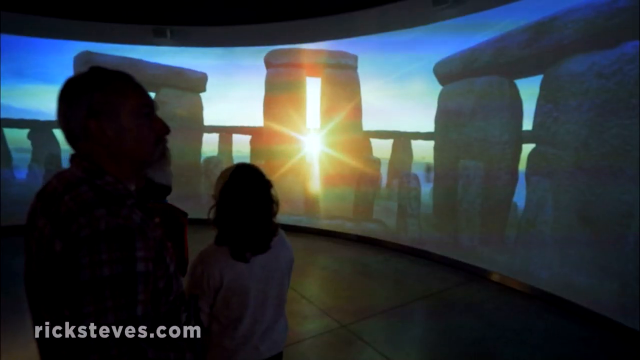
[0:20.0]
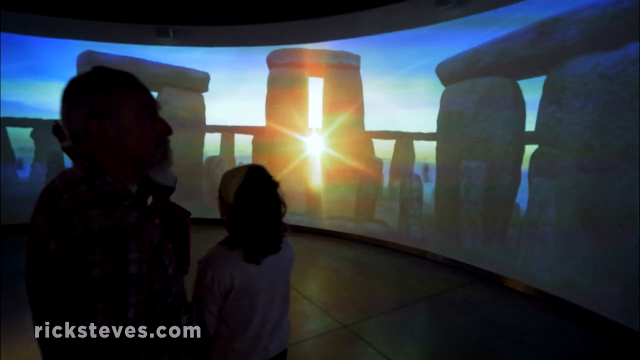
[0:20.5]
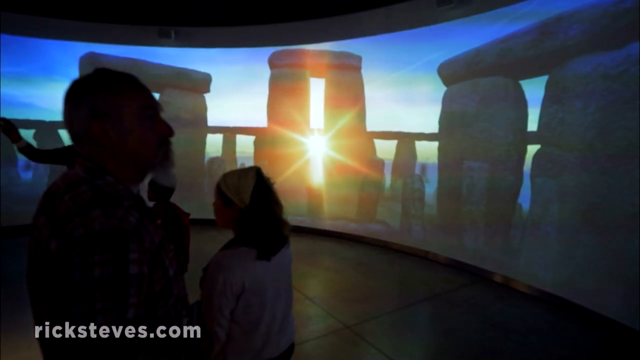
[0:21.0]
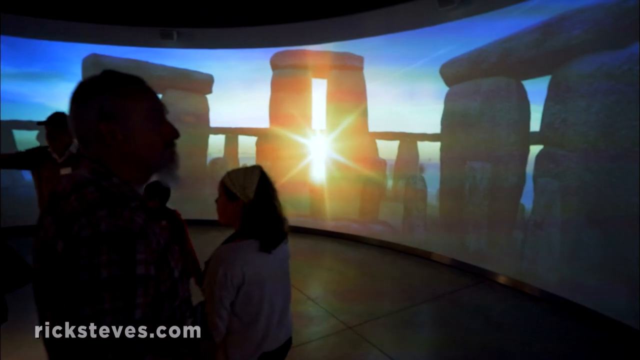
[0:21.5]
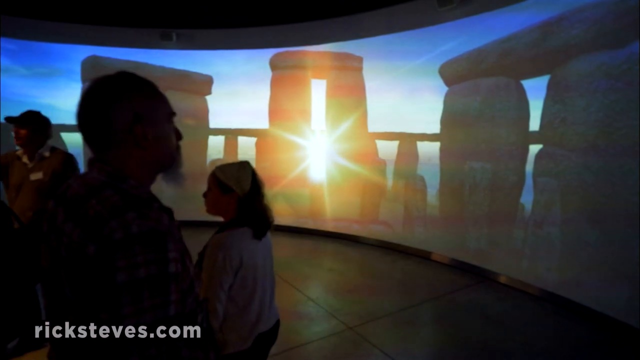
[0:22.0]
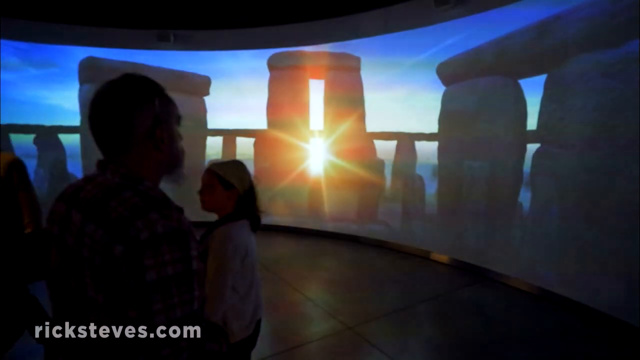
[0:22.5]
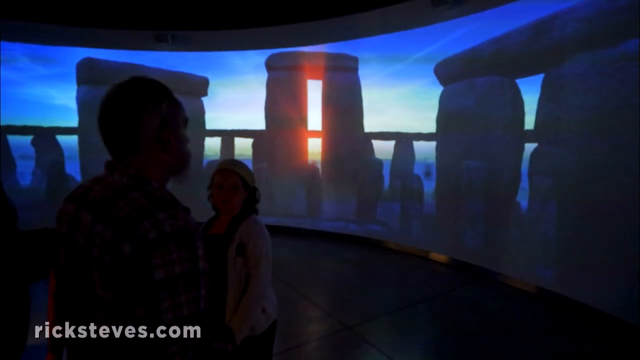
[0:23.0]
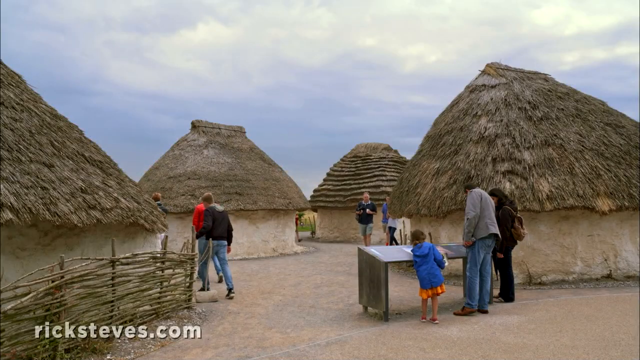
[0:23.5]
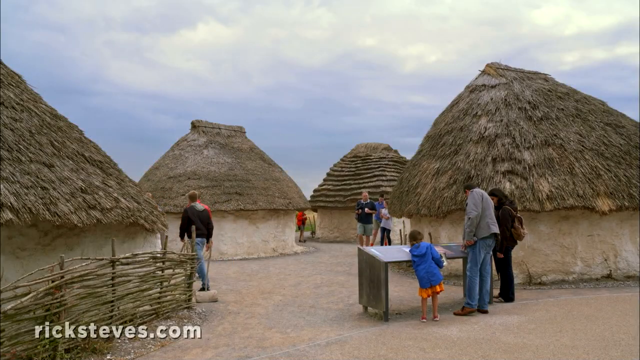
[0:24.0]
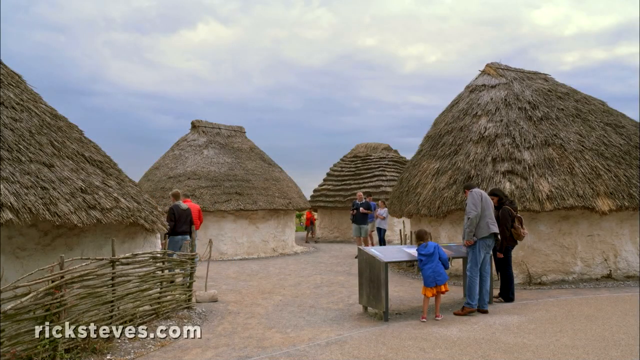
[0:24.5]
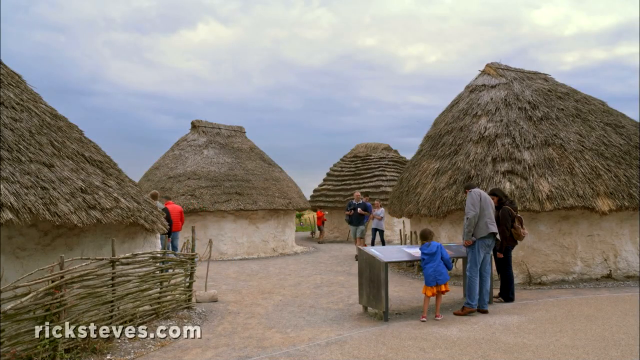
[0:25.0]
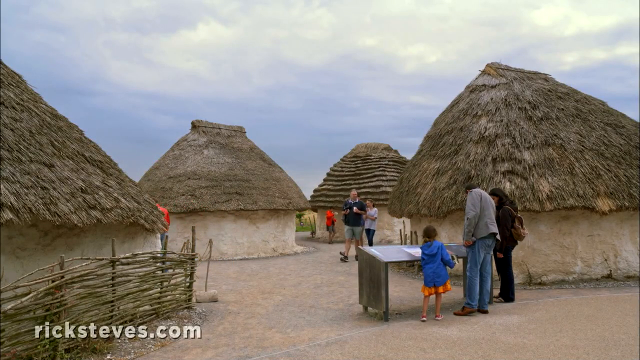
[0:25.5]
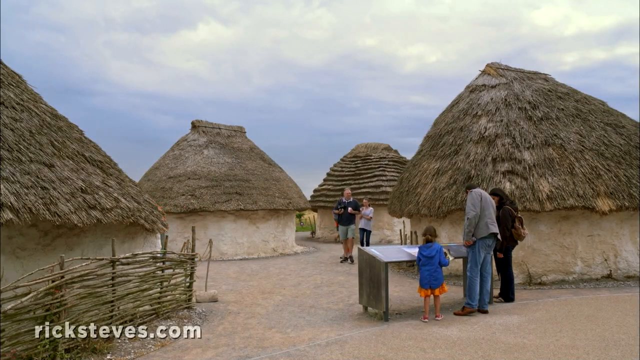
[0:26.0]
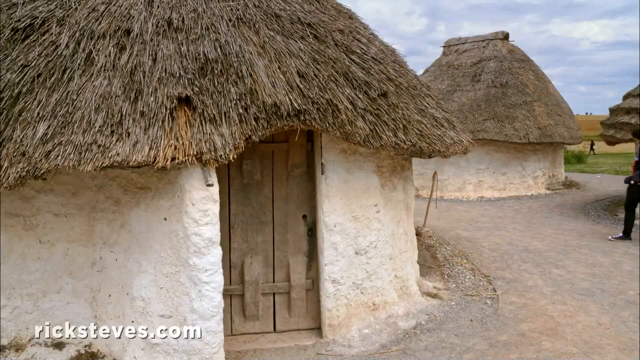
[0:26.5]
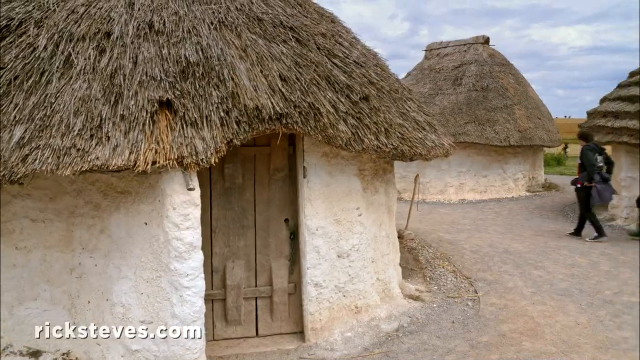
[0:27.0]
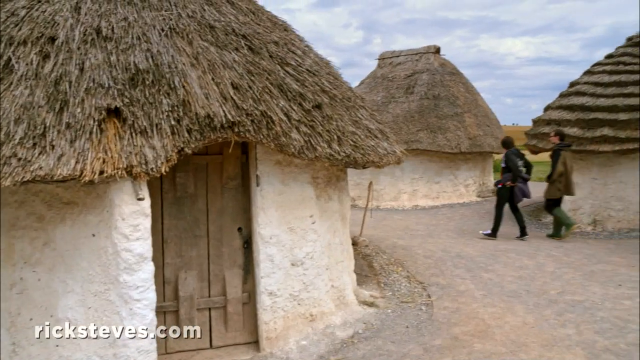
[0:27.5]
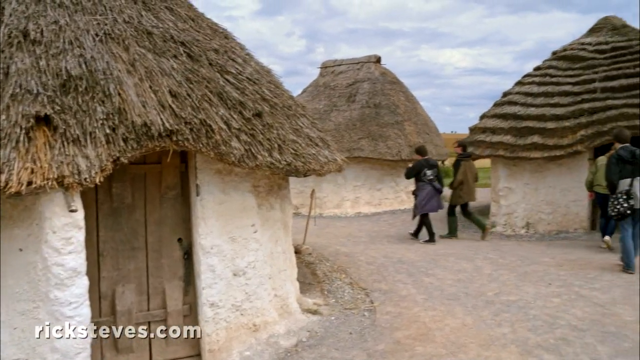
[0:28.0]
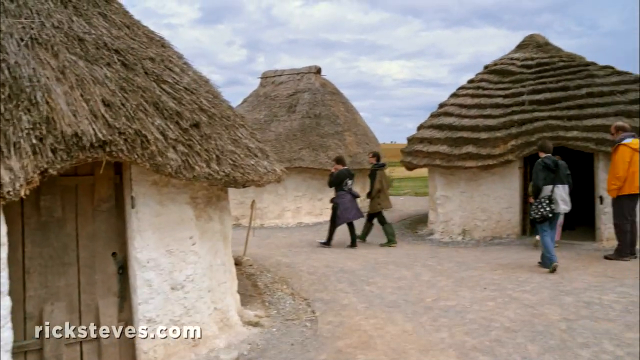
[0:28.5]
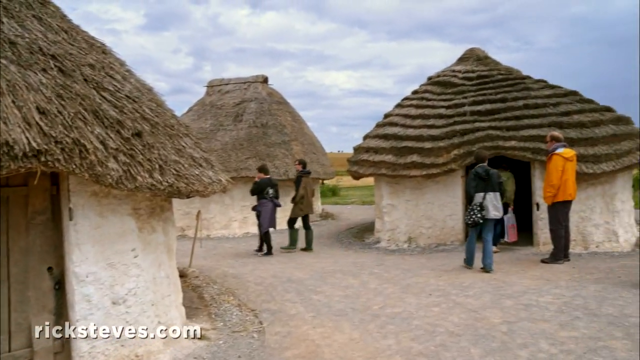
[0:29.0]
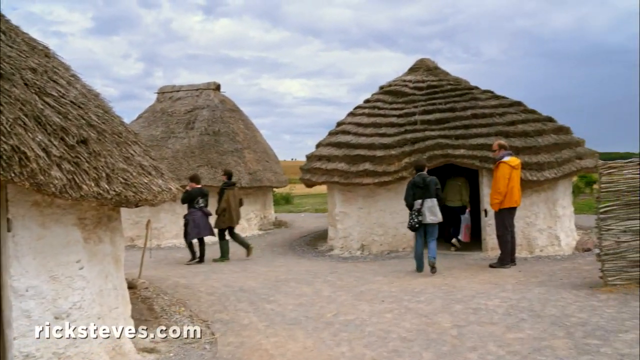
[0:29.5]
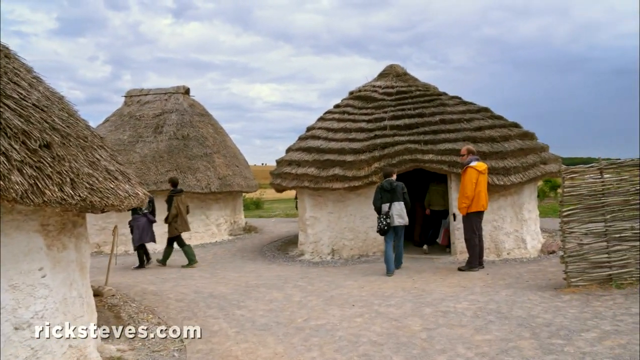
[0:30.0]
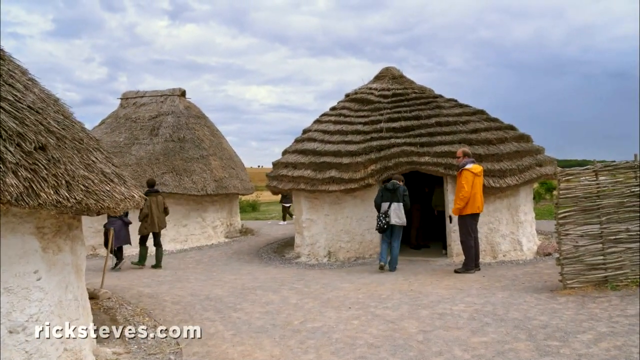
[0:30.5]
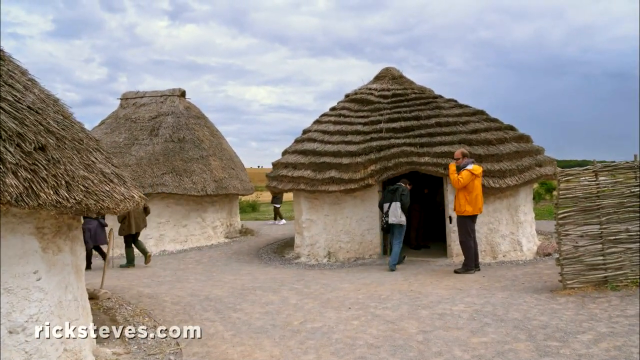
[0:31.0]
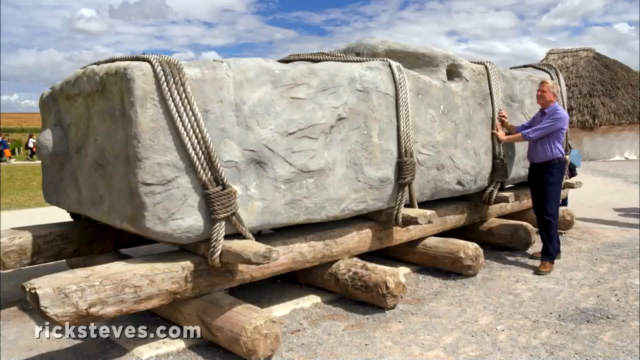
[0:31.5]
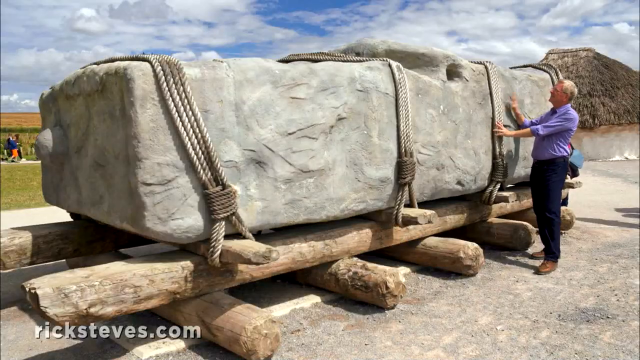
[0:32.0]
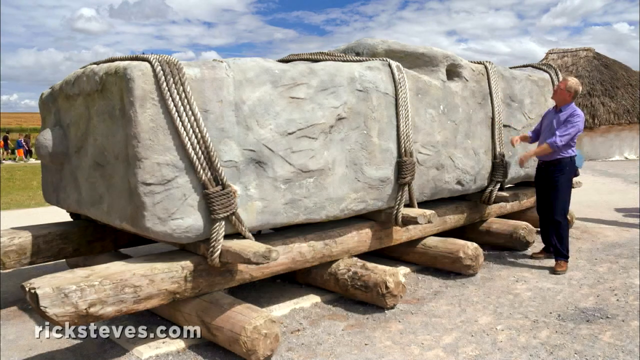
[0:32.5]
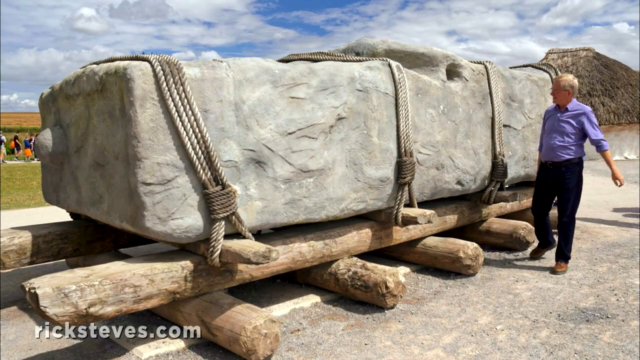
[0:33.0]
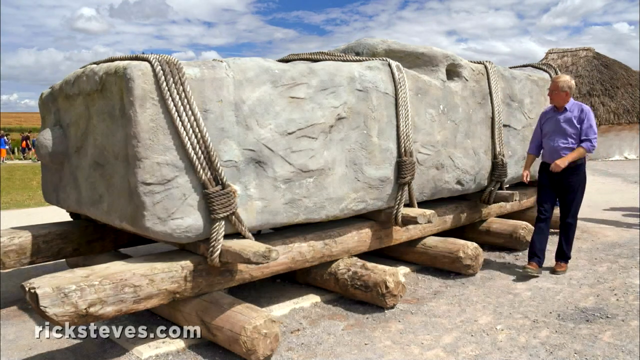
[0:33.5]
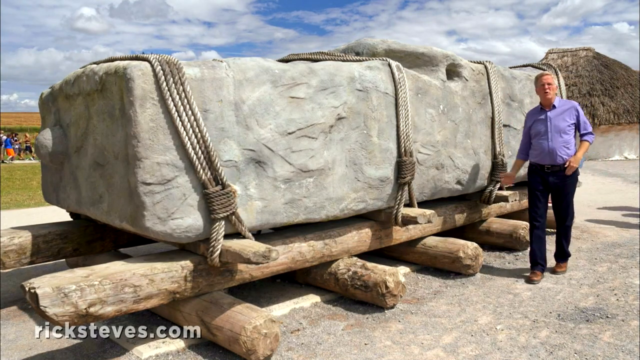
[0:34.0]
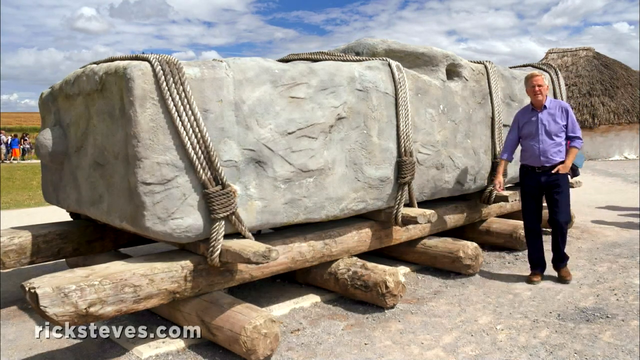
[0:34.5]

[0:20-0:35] Three people are inside a glass enclosure that looks like it is in the Stonehenge area. A man stands next to a great big boulder that is strapped to a big wooden platform; he wears black pants and a blue button-up shirt. An area has several clay huts with straw roofs. Three people in the area of the clay huts stand in front of an information table, and a young child in a blue jacket and an orange skirt stands at the tourist table. Bright sunlight comes through one of the openings of the Stonehenge stones. About six people walk around the hut area.